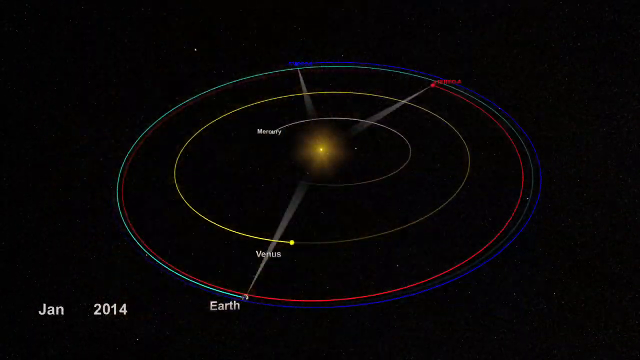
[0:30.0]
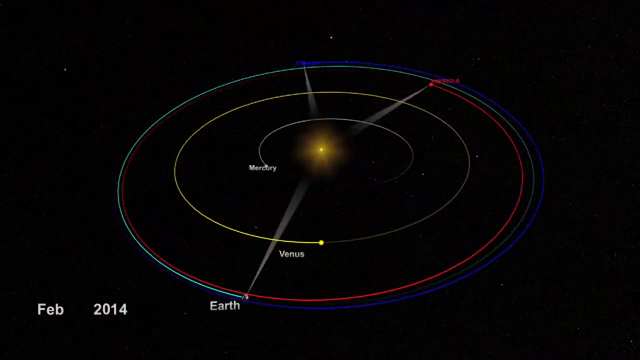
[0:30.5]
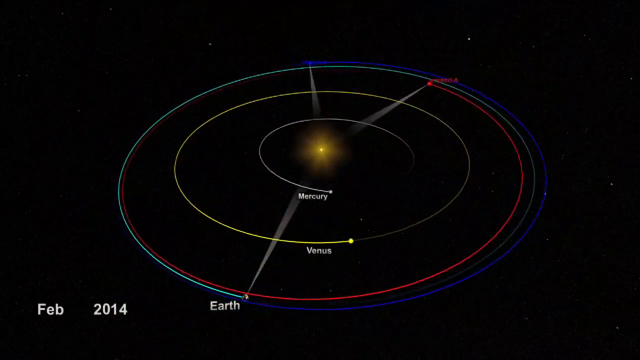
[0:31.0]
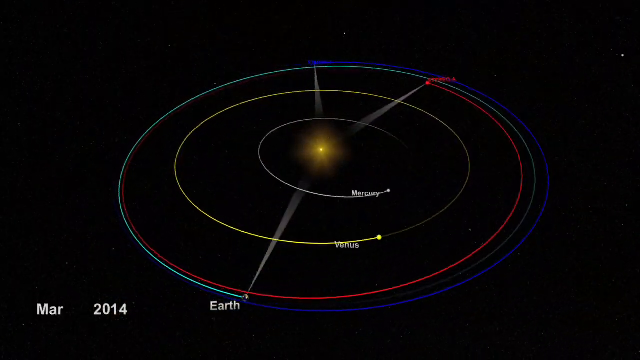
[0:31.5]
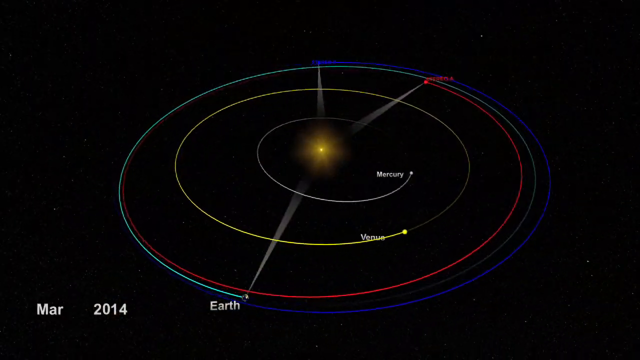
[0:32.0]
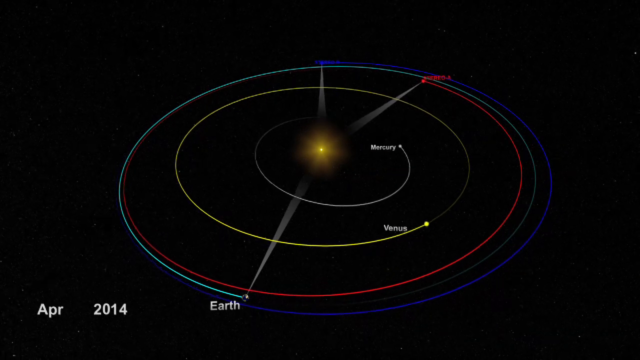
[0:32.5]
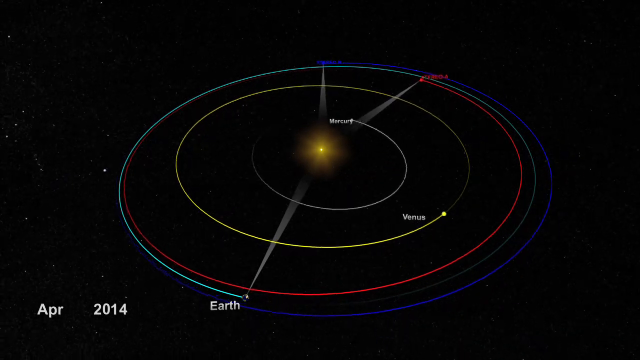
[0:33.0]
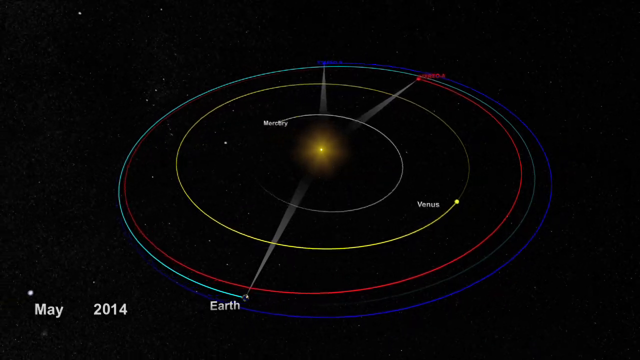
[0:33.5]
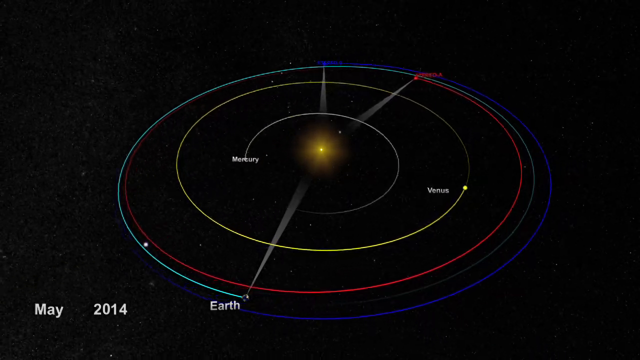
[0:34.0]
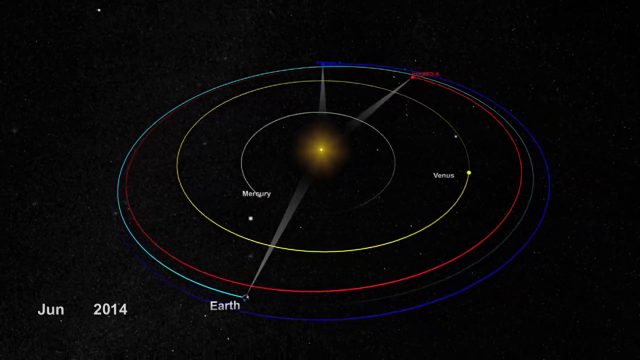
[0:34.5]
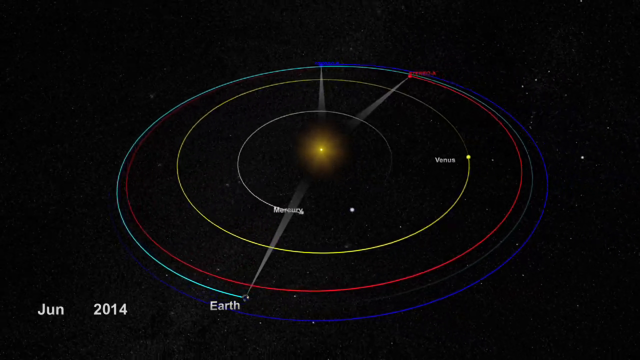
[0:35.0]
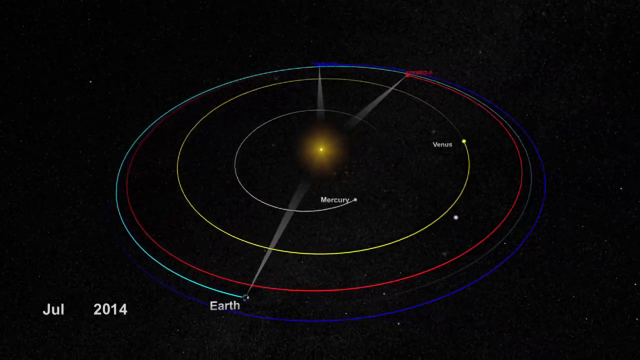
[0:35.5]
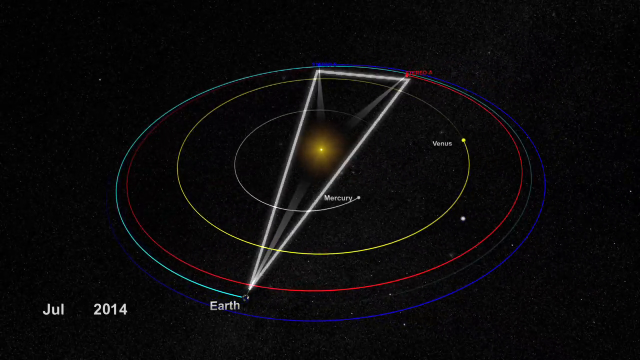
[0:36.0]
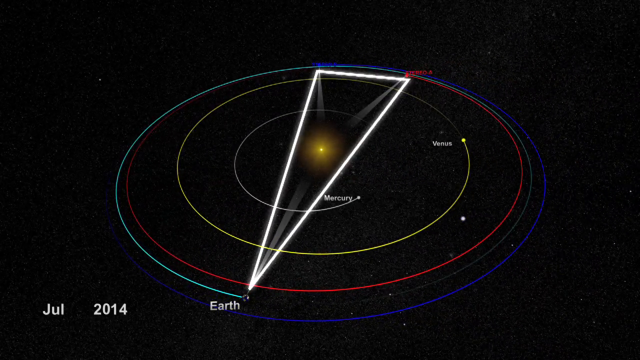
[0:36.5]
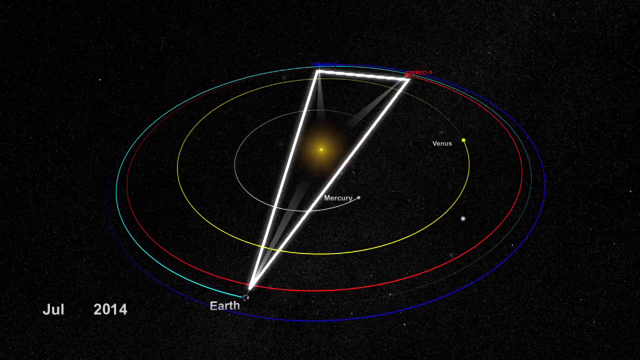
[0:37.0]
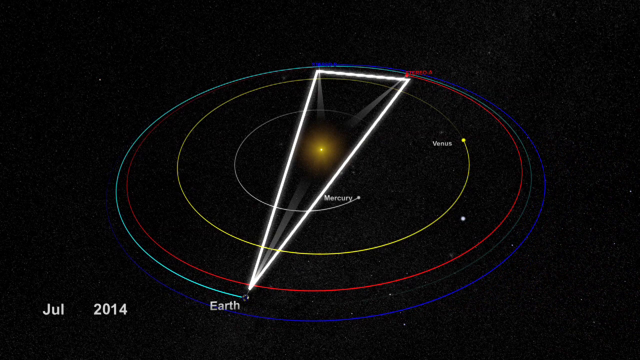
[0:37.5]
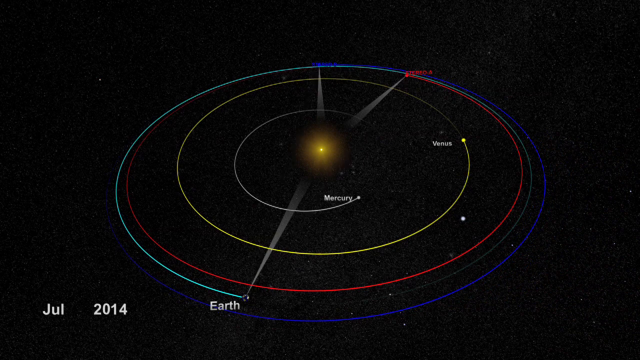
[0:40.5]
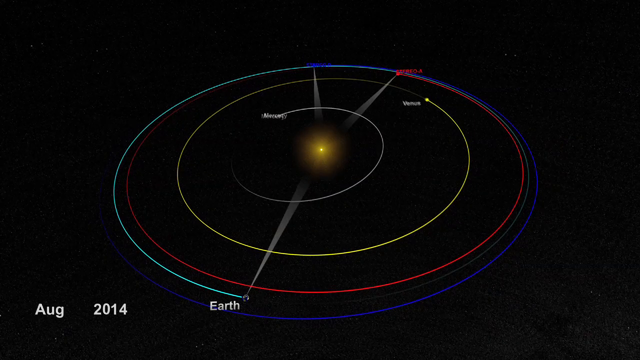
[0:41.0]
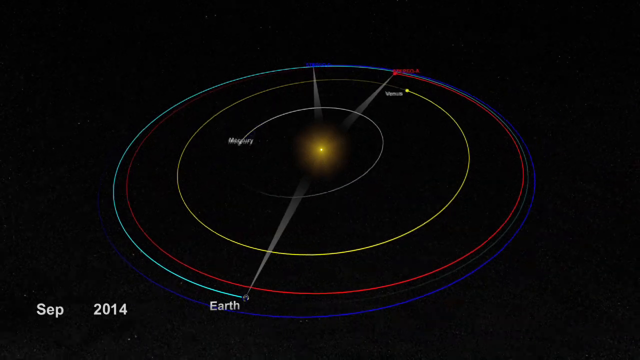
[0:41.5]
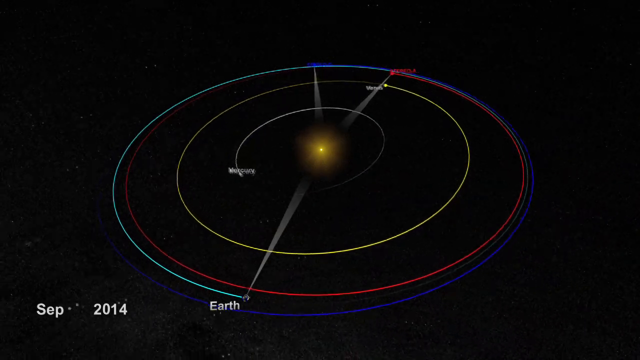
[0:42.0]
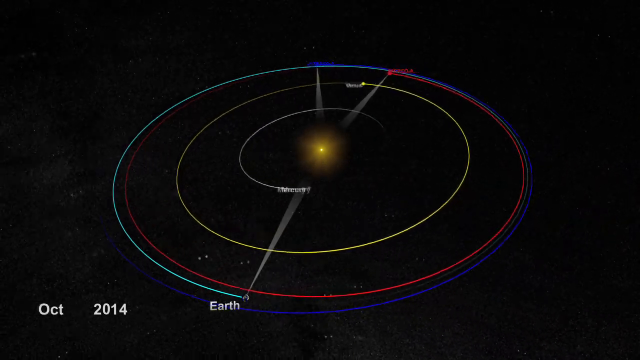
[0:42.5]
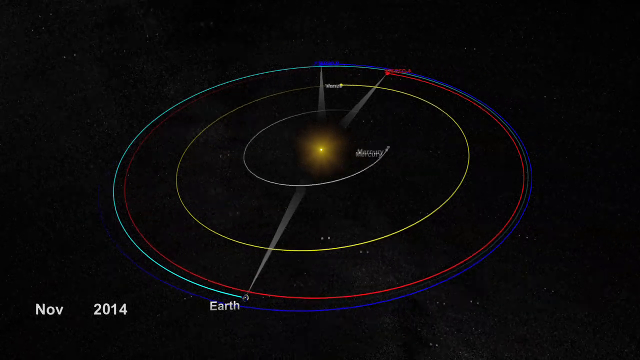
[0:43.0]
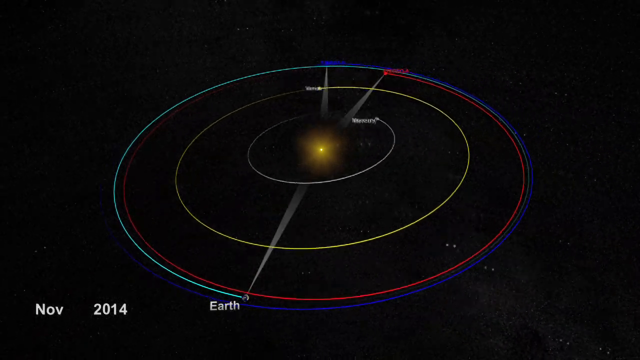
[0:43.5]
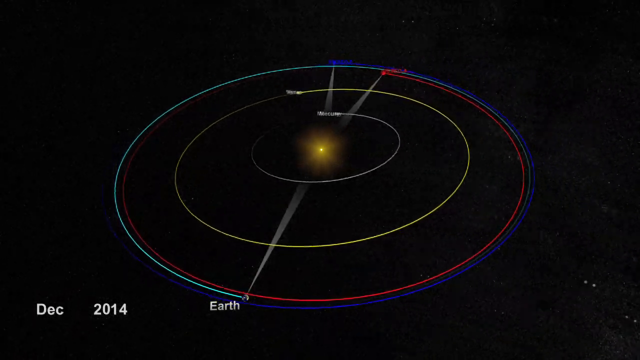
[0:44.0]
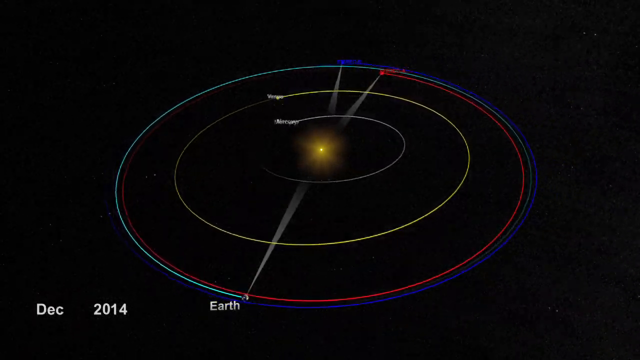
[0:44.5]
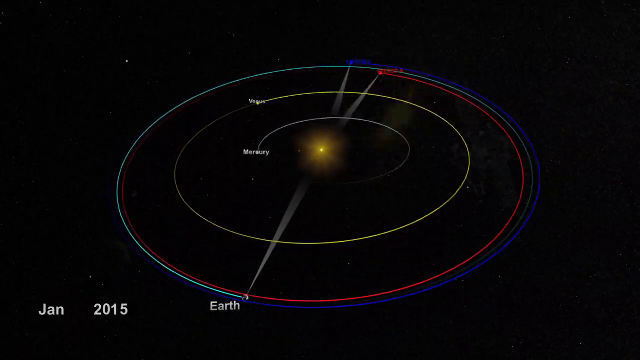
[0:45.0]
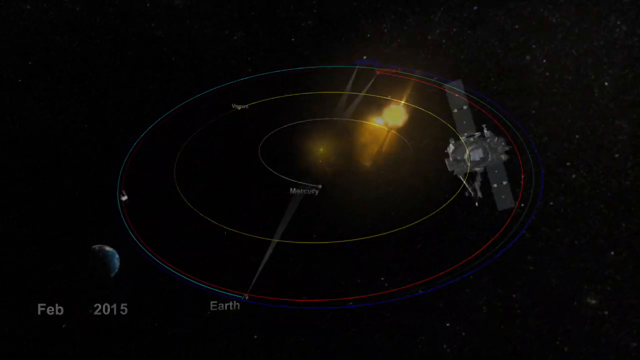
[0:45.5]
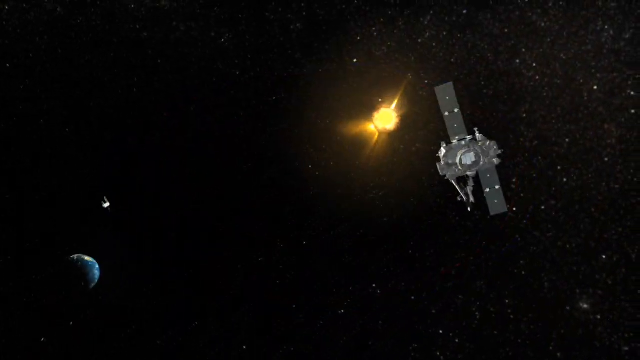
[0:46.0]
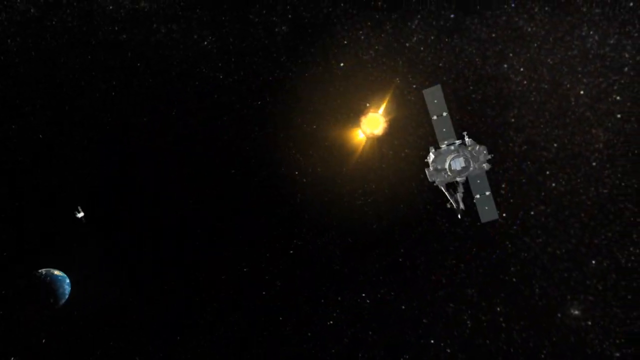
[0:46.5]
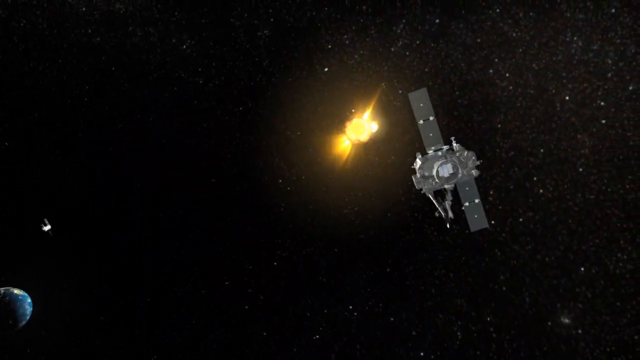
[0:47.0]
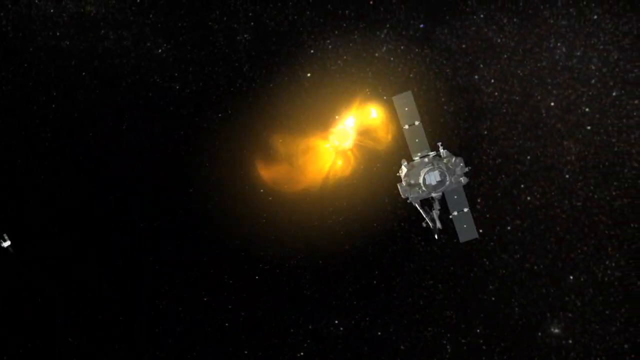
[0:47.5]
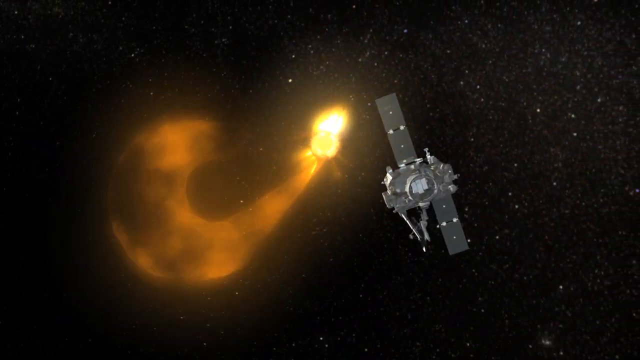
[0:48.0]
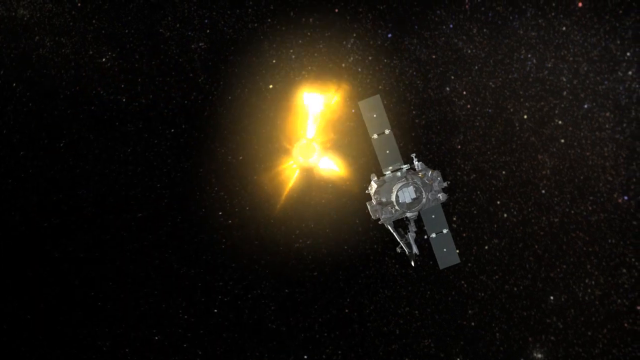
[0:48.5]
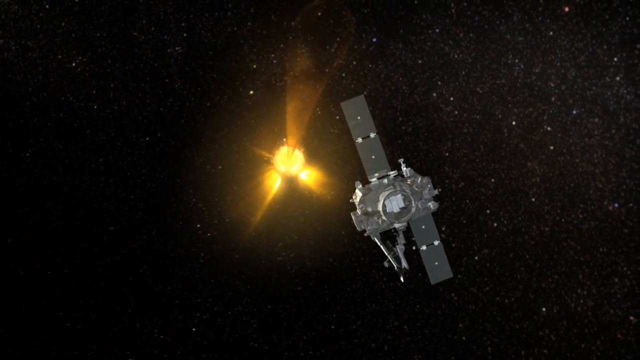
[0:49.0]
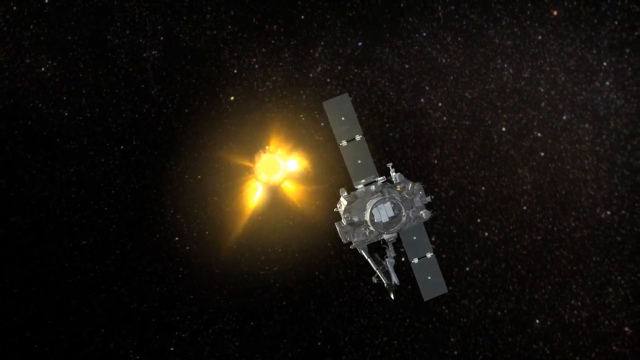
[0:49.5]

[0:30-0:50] A 3D rendering of the solar system has the sun in the center. Around it are a white circle with a planet labeled "Mercury," a yellow circle with a planet labeled "Venus," a red circle with random numbers and letters labeling some kind of satellite, and a final light blue circle on the outer edge labeled "Earth." The planets rotate around the sun. The video then pauses and shows a white triangle with its pointed end pointing towards Earth and its bottom ends pointing towards a red satellite and a new blue satellite. The satellites seem to keep Earth on the opposite end of the triangle, with the sun between the two satellites and Earth. The triangle disappears, and the planets and satellites go back to rotating around the sun.